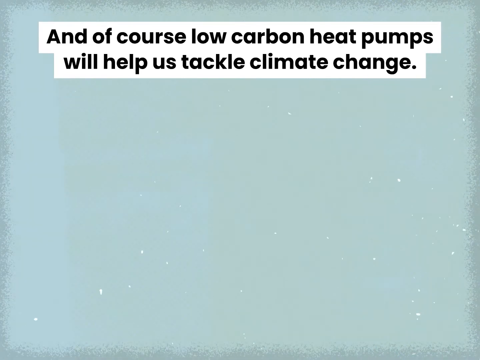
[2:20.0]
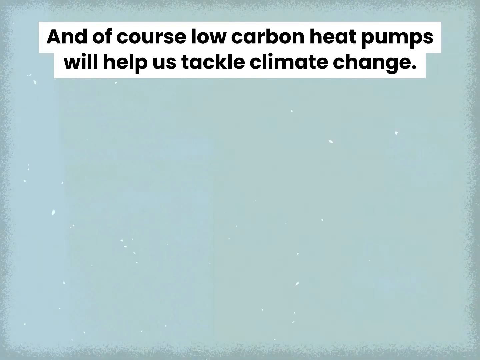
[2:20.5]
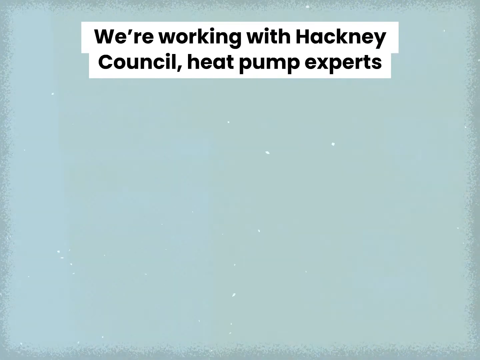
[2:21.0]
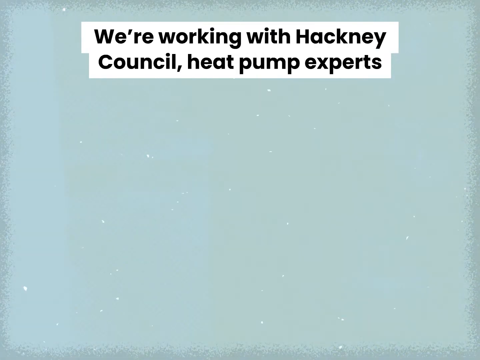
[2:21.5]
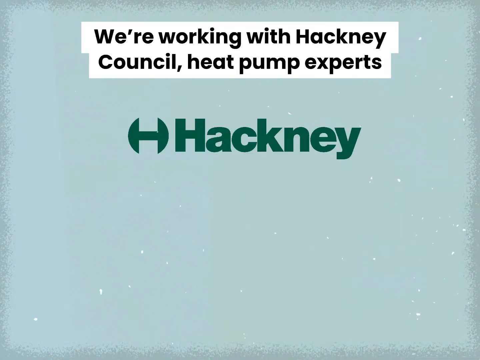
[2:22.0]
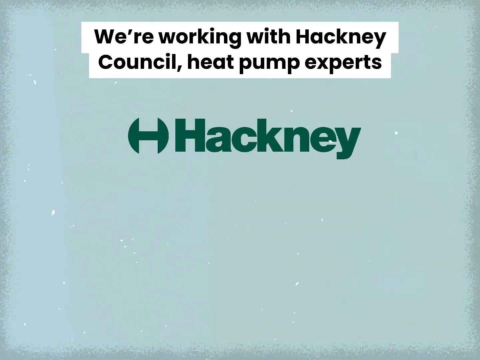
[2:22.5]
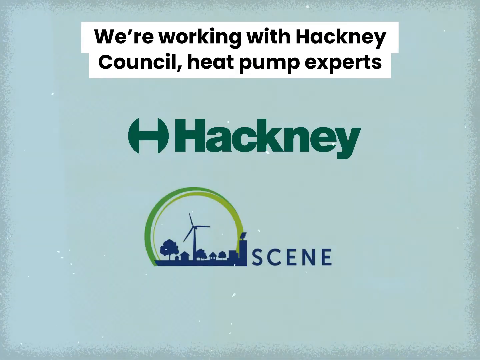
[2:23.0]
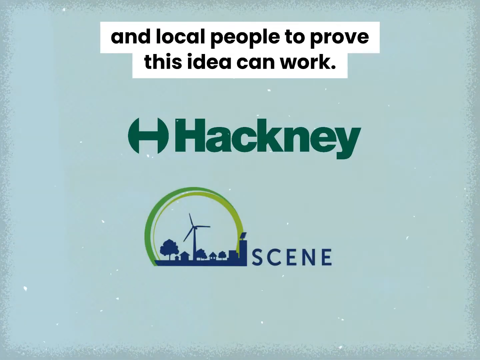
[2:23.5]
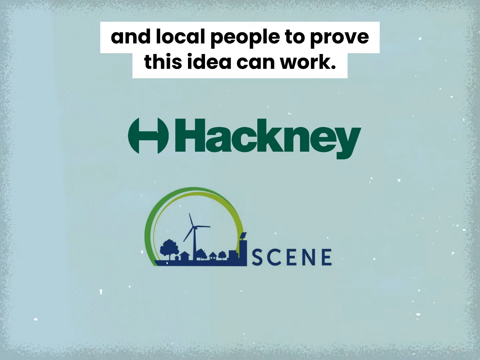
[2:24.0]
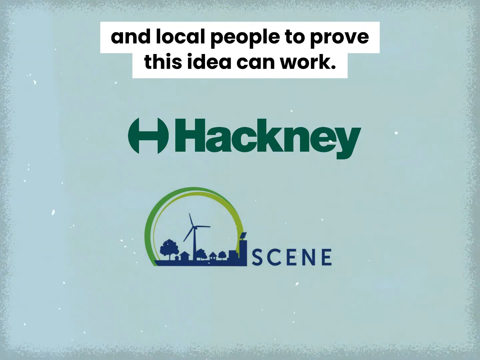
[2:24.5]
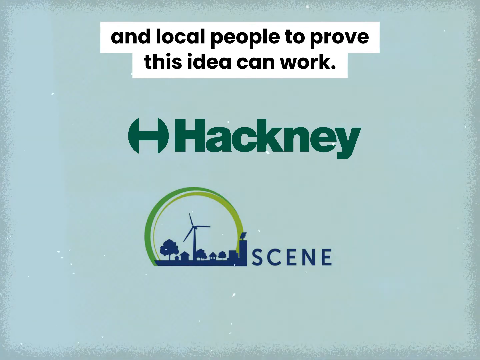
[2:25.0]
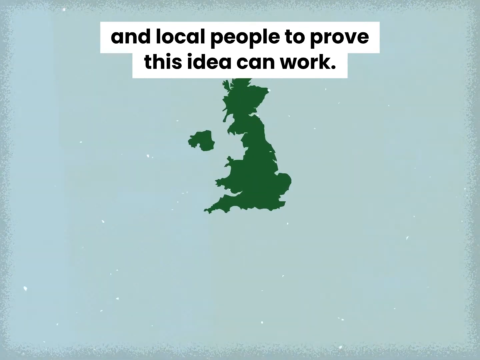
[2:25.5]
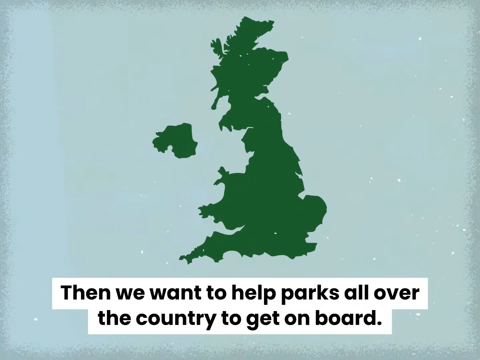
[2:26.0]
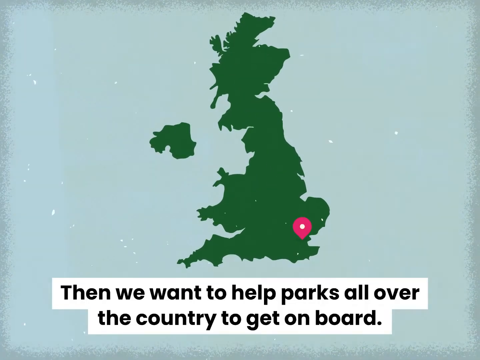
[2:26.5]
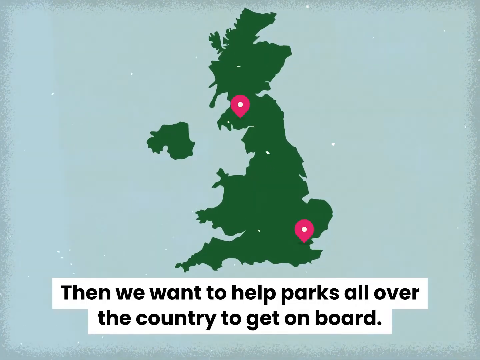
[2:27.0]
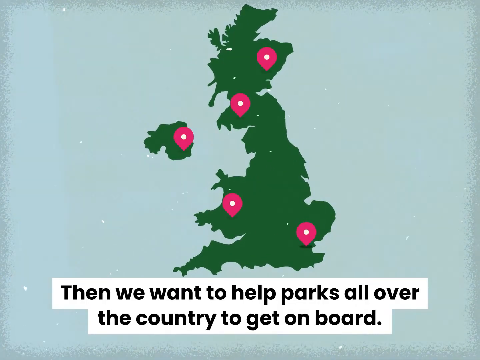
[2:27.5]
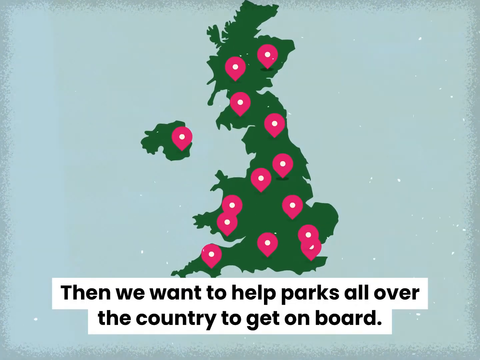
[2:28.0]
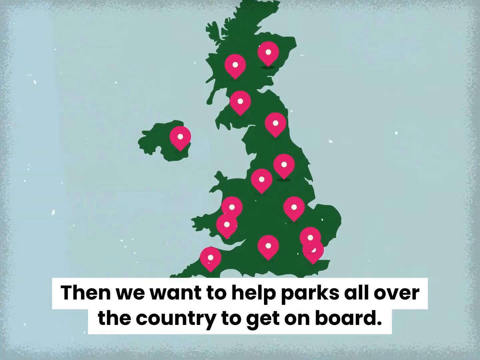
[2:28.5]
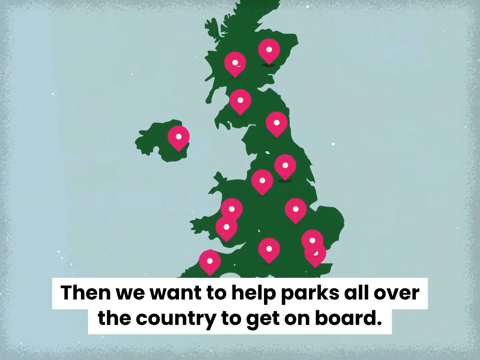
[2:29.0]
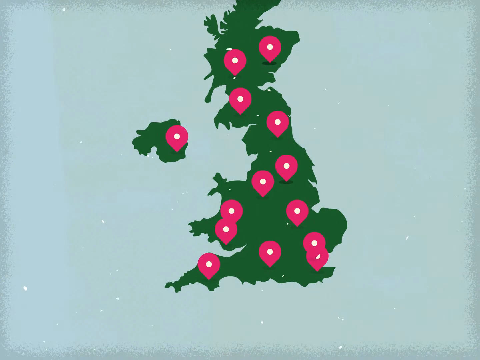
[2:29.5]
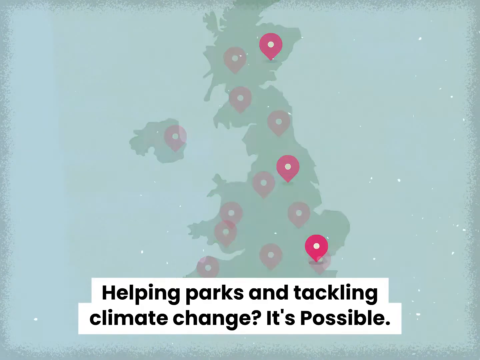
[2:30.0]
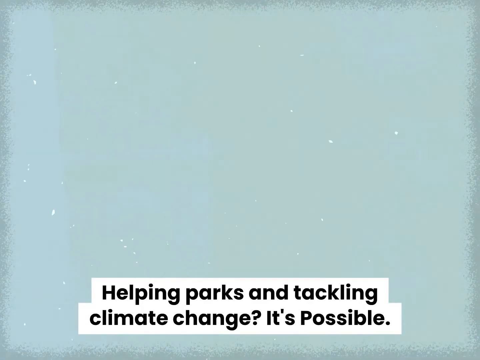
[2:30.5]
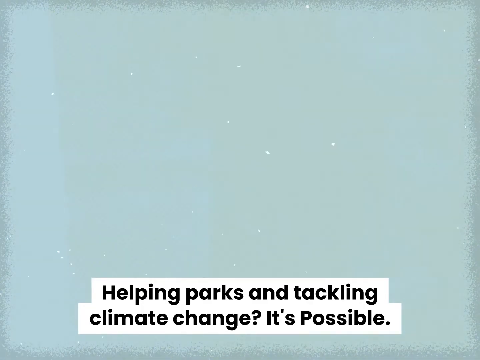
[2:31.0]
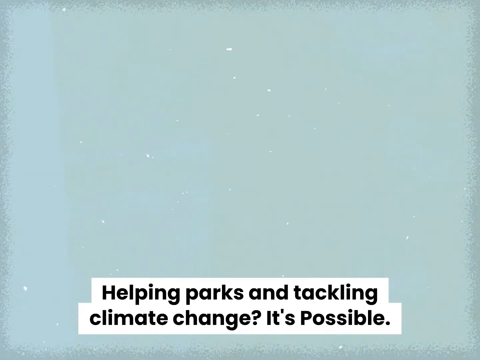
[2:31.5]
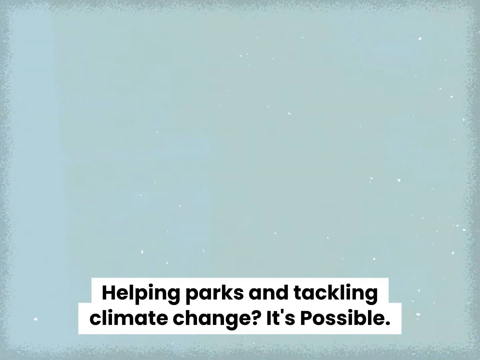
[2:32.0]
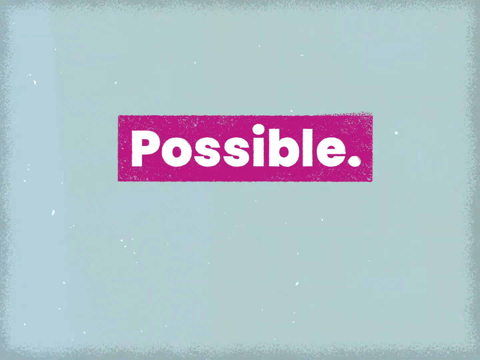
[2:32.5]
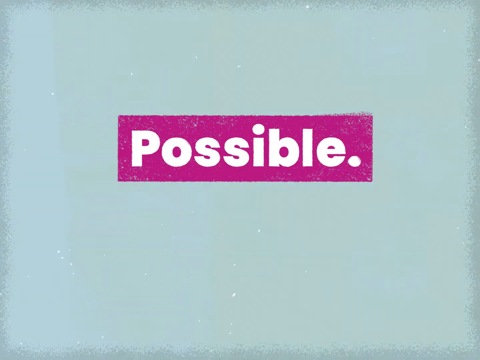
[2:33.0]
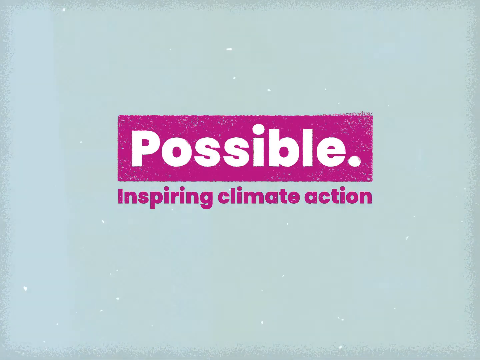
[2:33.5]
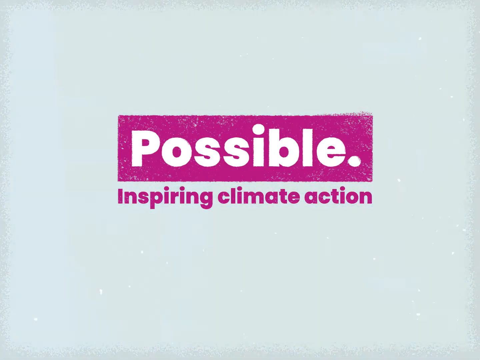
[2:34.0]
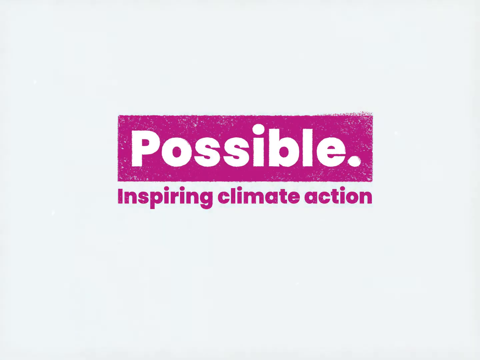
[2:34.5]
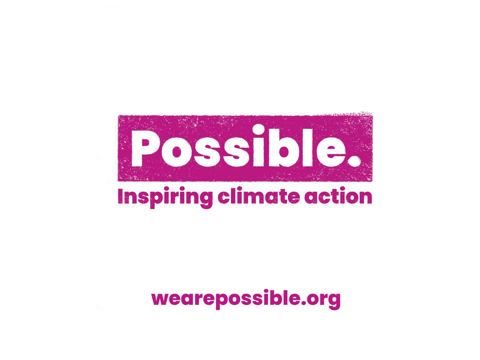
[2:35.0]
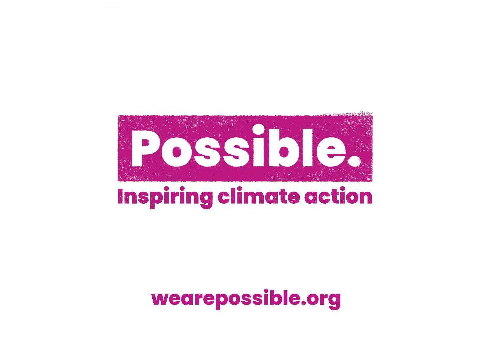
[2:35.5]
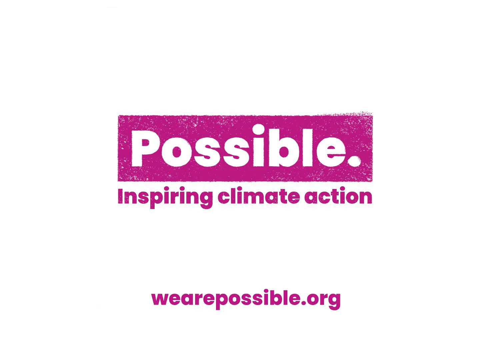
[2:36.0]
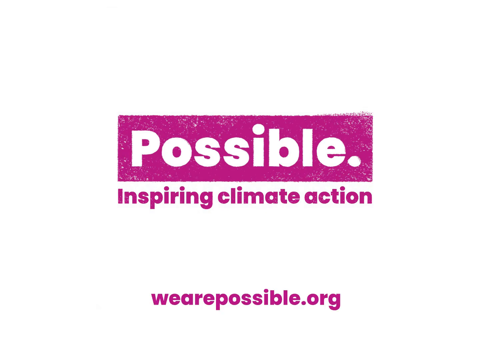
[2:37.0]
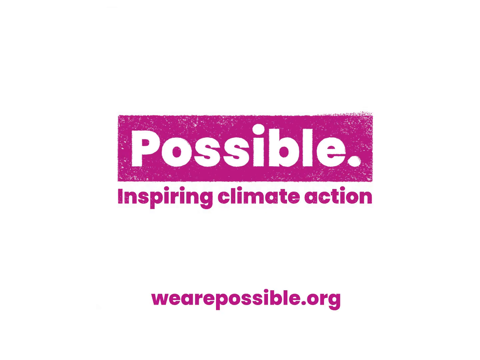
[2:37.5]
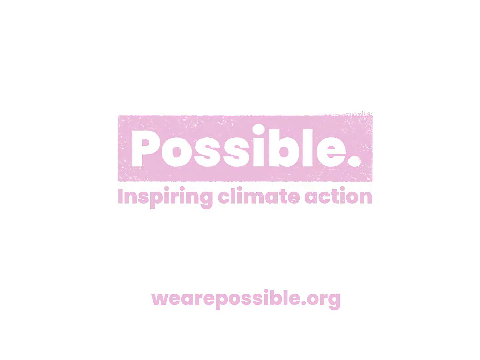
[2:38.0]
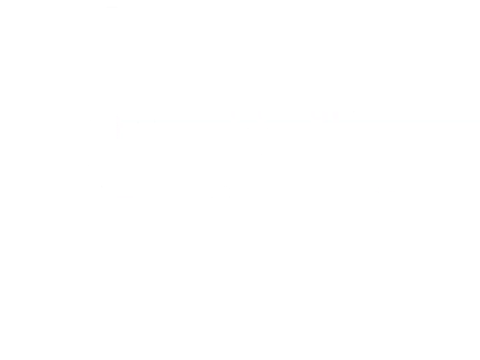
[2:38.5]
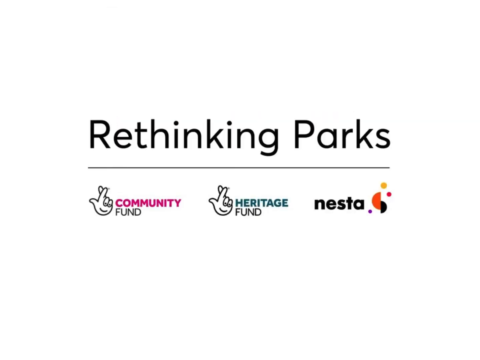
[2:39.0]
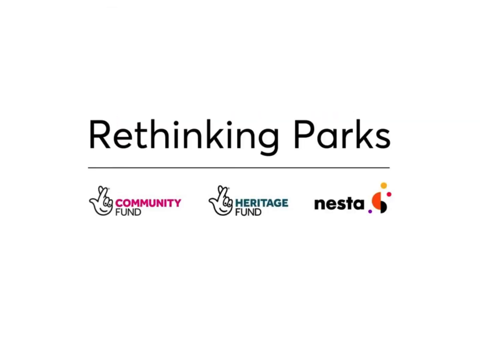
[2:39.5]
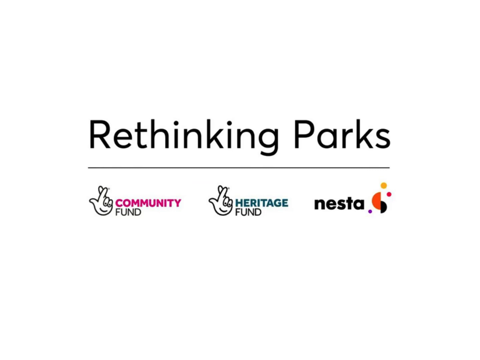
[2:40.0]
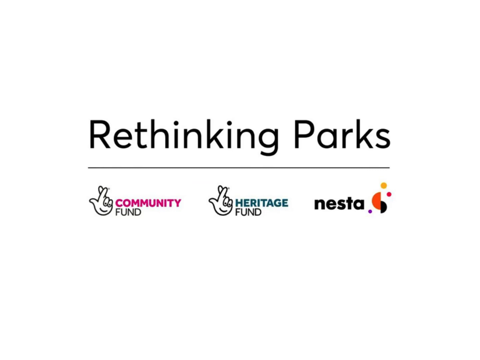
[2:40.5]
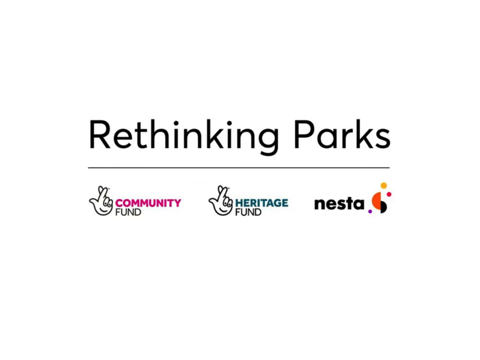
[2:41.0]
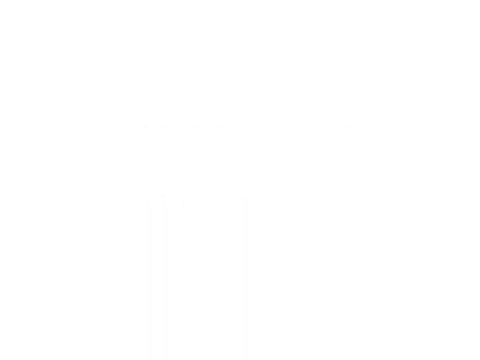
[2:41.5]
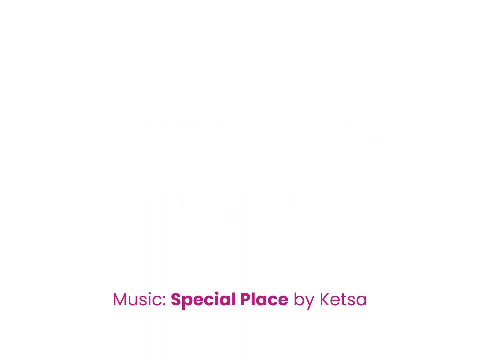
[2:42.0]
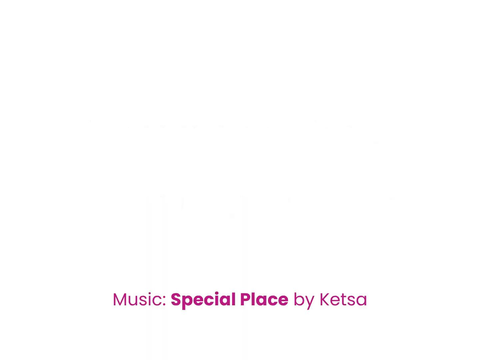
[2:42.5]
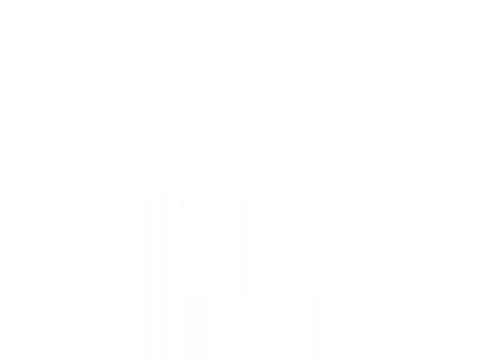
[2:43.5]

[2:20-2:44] The view shows more of the sky, which still has a grayish, foggy look, going all the way up into the sky; the ground, city and park are no longer visible. A subtitle reads "we're working with Hackney Council heat pump experts" and local people "to prove this idea can work." Then a map appears with the text "then we want to help parks all over the country to get on board." After that it reads "helping parks and tackling climate change it's possible," then "possible inspiring climate action," with "wearepossible.org" at the bottom. Next it reads "rethinking parks," with three organisations shown at the bottom: Community Fund, Heritage Fund, and Nesta. Finally the text says "the music is Special Place by Ketsa." The video appears to have been made by a company named Possible.